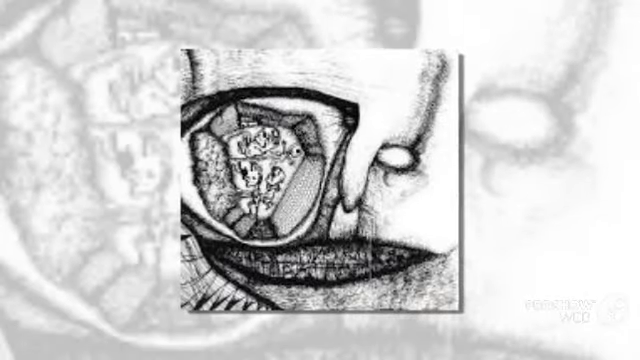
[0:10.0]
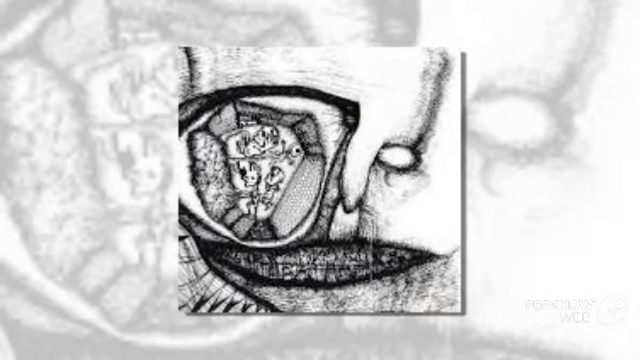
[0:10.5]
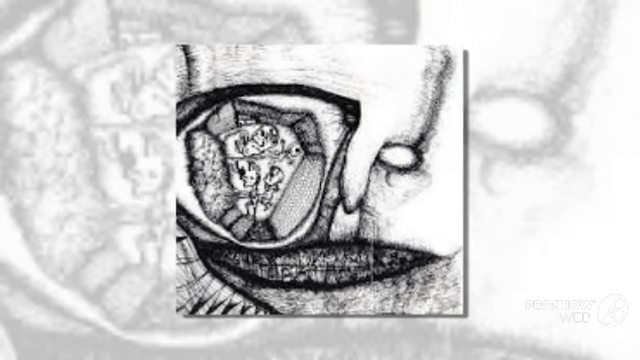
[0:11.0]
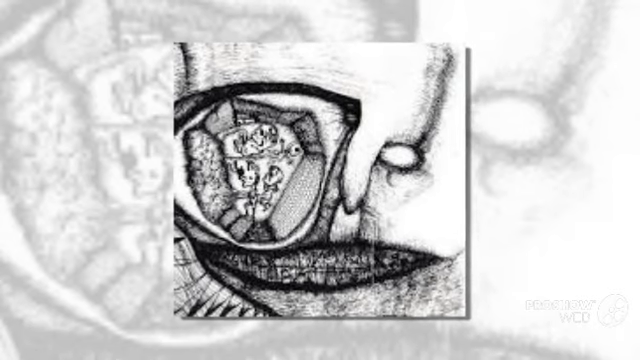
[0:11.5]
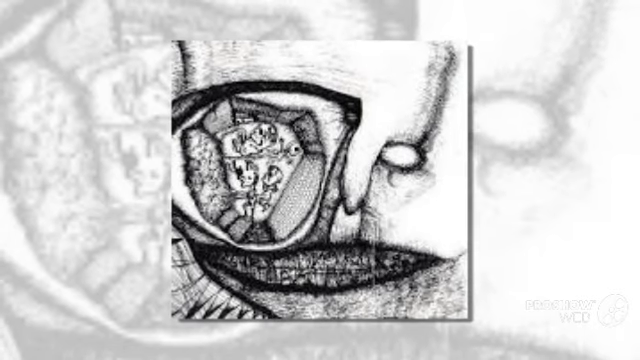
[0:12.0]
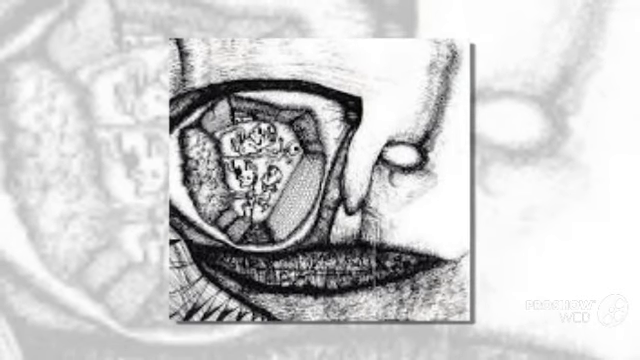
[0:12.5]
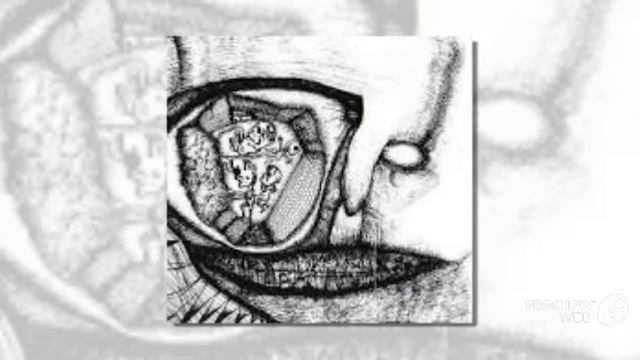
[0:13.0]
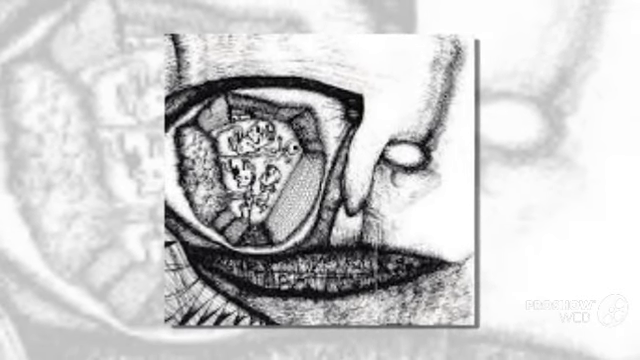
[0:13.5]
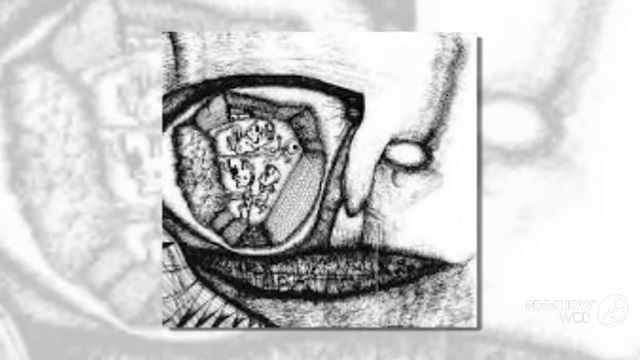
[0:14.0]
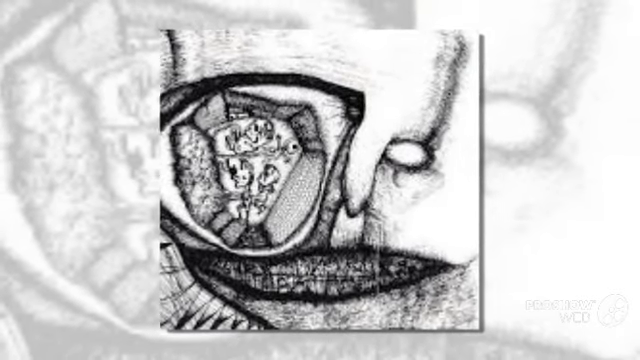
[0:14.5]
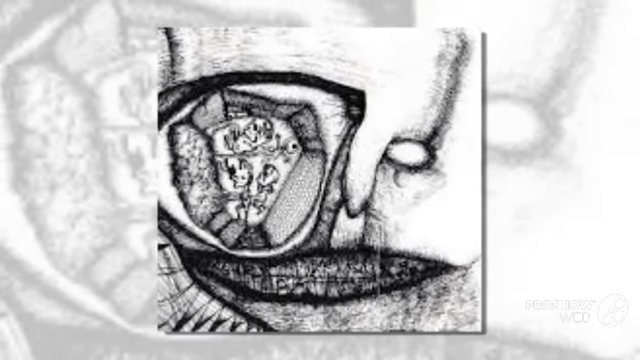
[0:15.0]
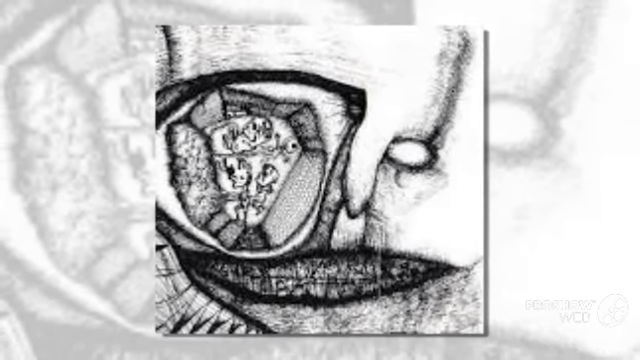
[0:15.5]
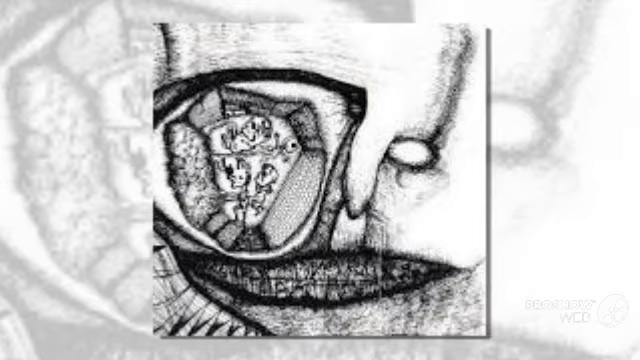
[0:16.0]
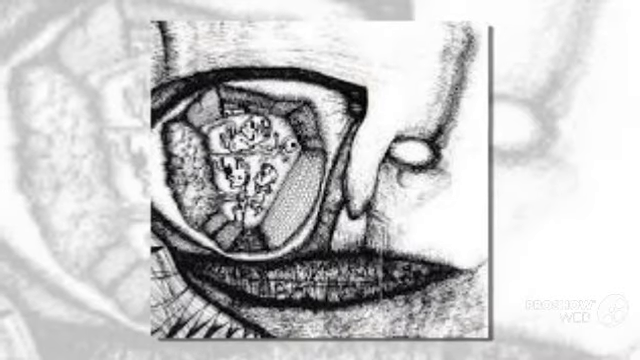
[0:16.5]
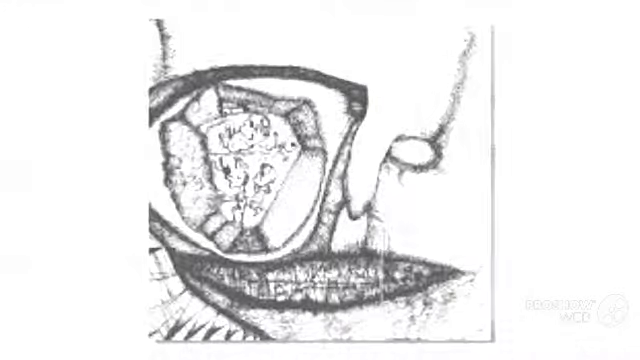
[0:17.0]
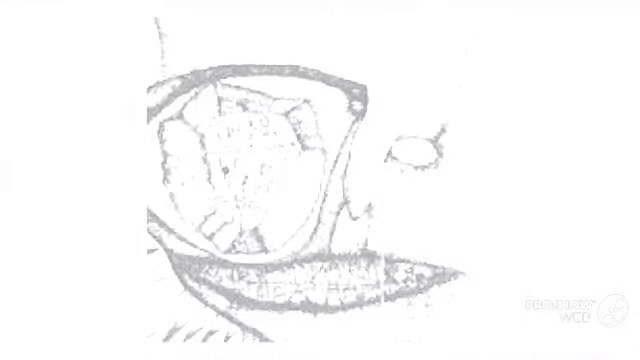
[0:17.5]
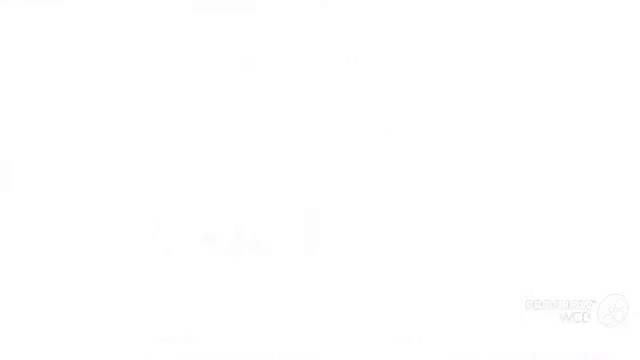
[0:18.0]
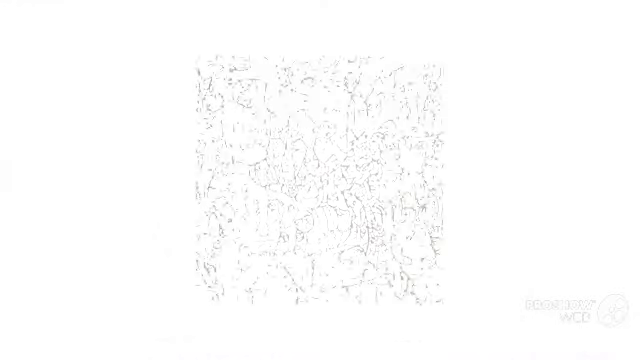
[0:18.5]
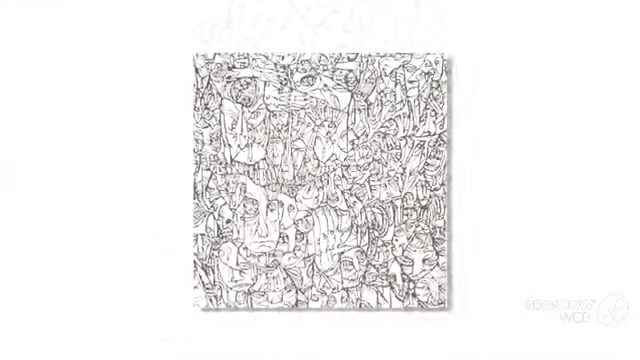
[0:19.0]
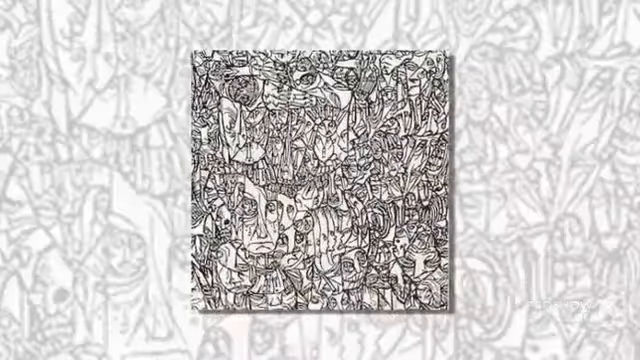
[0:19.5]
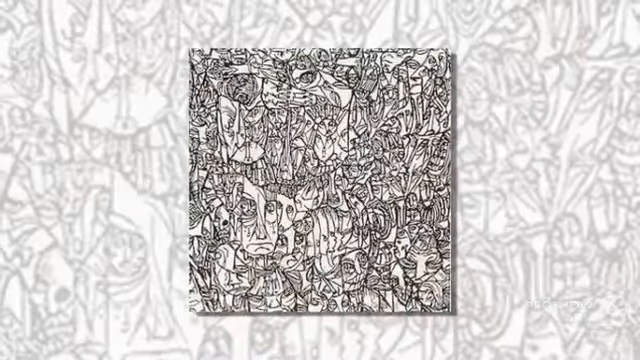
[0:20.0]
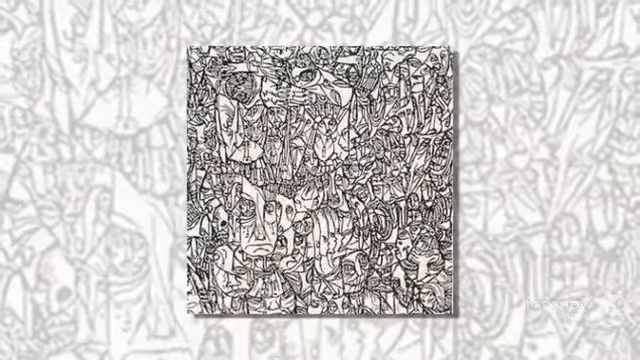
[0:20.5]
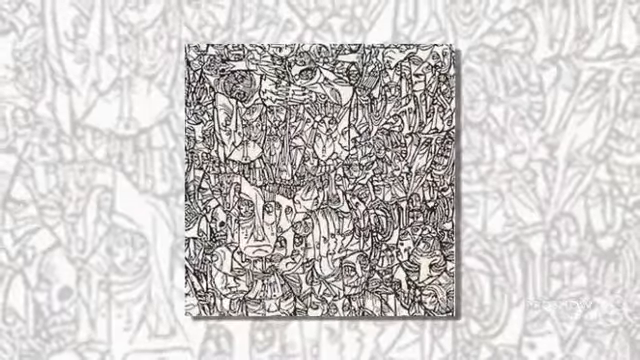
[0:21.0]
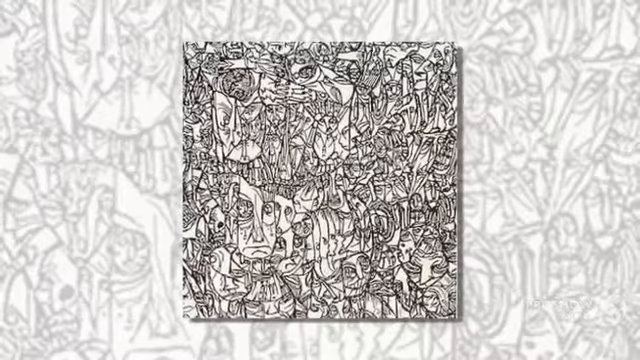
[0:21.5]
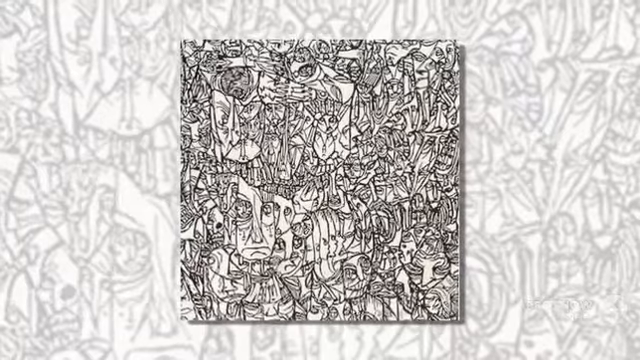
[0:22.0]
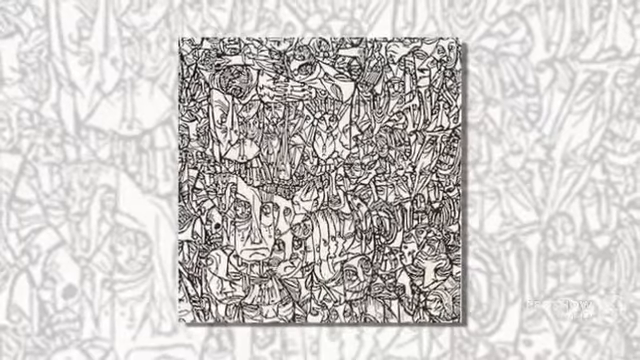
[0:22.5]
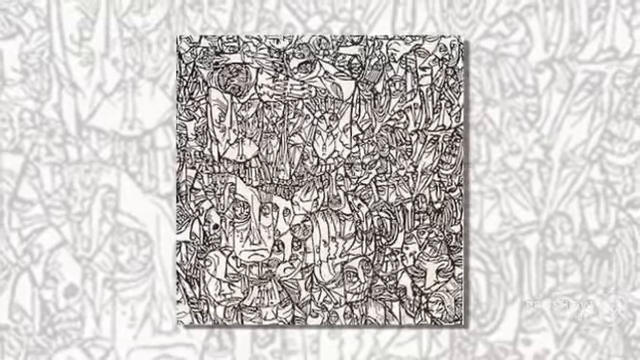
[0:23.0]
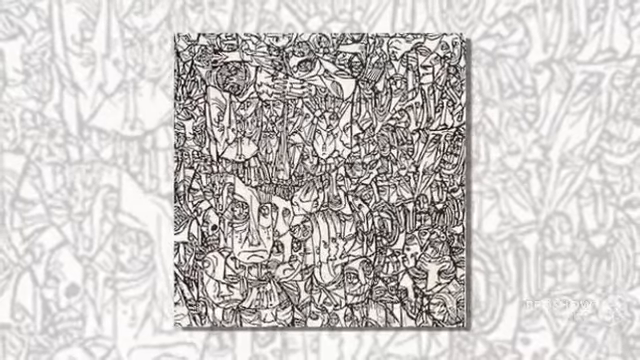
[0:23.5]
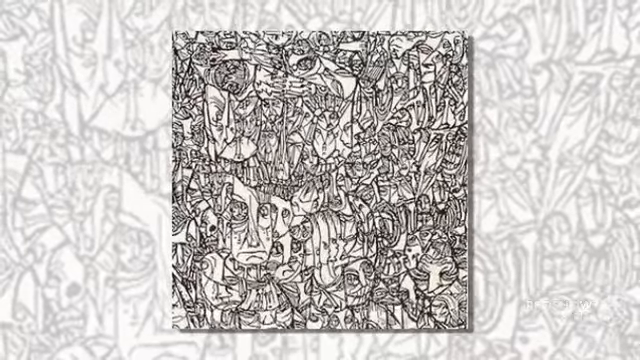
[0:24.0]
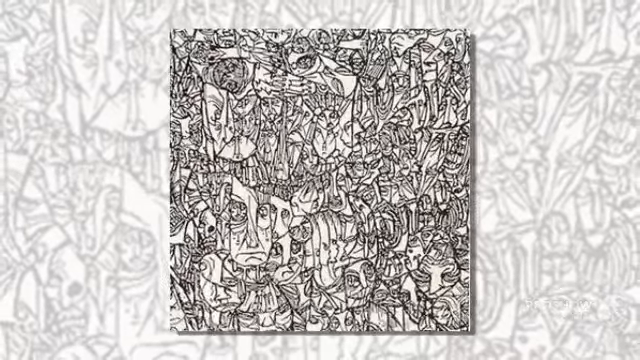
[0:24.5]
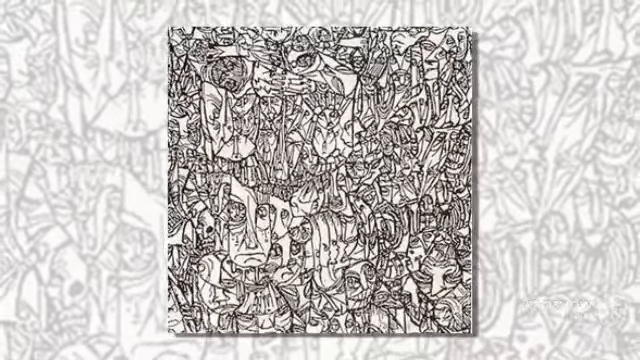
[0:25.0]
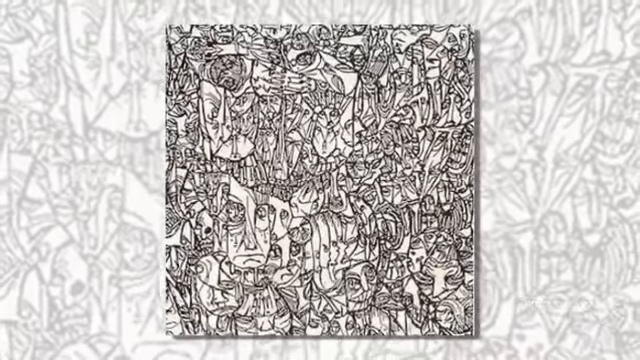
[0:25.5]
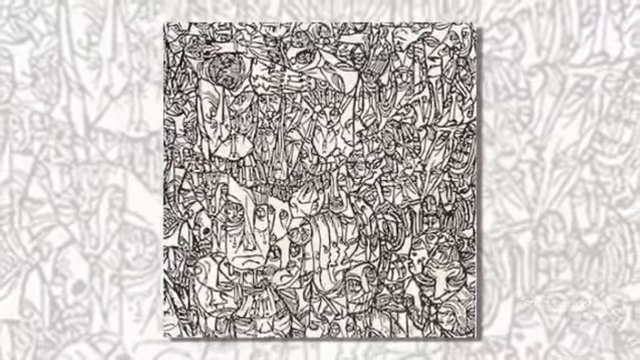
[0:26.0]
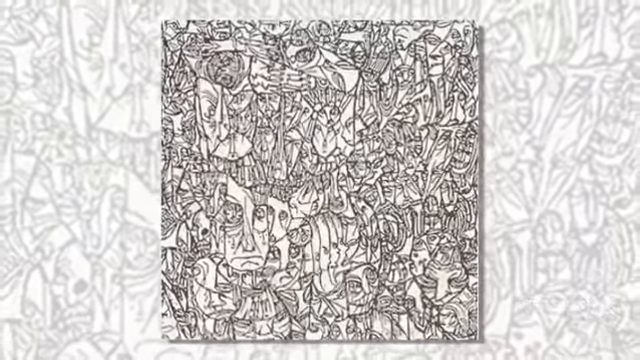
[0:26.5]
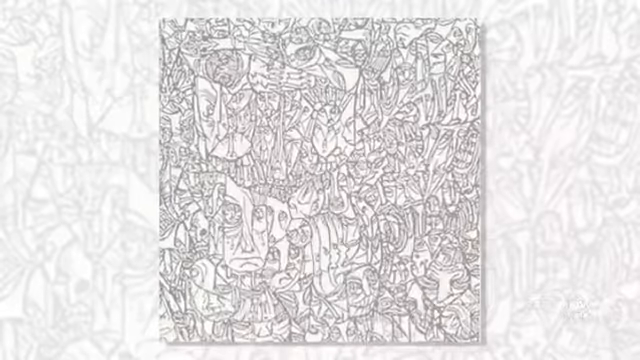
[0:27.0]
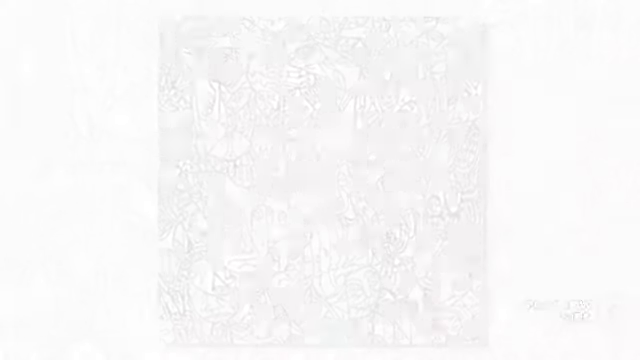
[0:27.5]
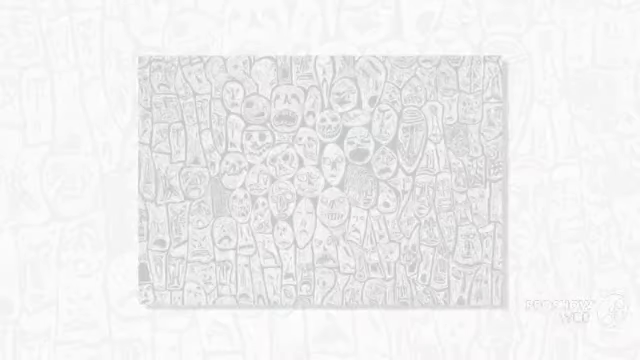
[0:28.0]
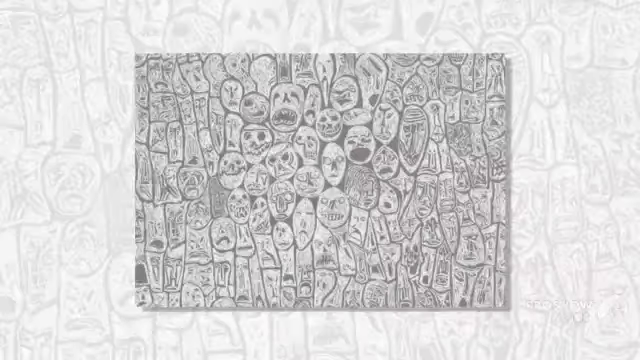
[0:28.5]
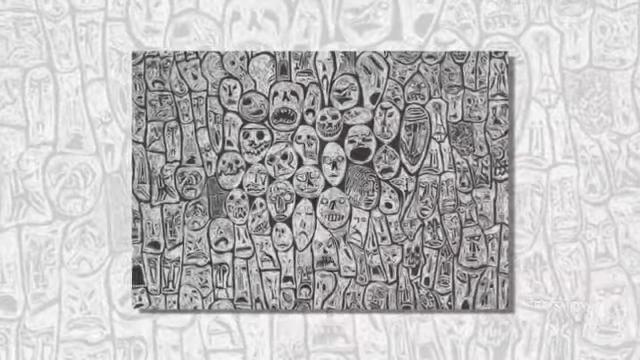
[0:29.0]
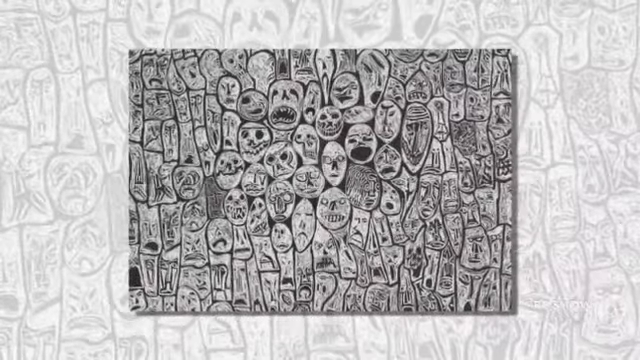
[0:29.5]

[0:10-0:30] The new picture looks like a close-up of a person's eye, or perhaps a mountainside made to look like a person's face. The view zooms in on the eye section, which has been carved out to show black and white line drawings on the walls that look like skulls and skeletons. The zoom continues, then the image fades to white and switches to another picture. This one seems to be a Picasso-like picture with tons of faces lined up against each other. Some look to the left, some to the right, and some towards the viewer. Some faces have really big foreheads and some barely have foreheads. The ones facing the viewer seem to have really big eyes, while the ones not looking at the viewer seem to have quite small eyes. Then it changes to one more picture of another bunch of faces.